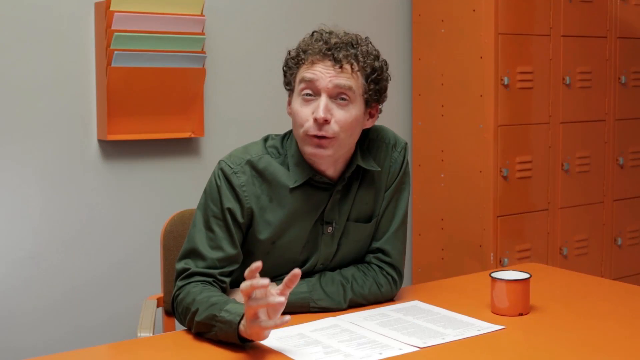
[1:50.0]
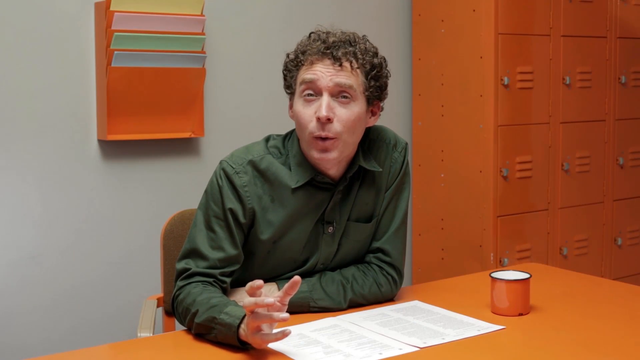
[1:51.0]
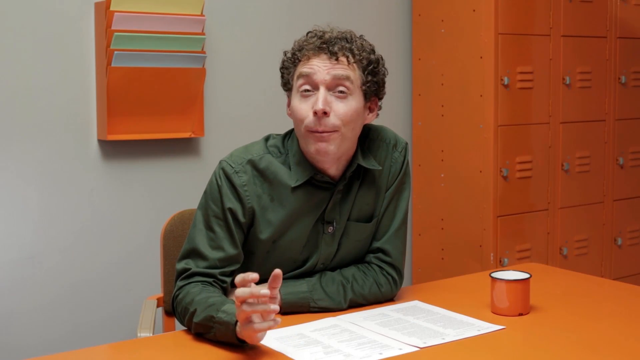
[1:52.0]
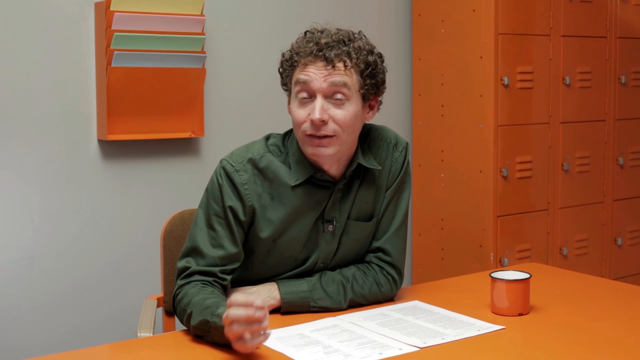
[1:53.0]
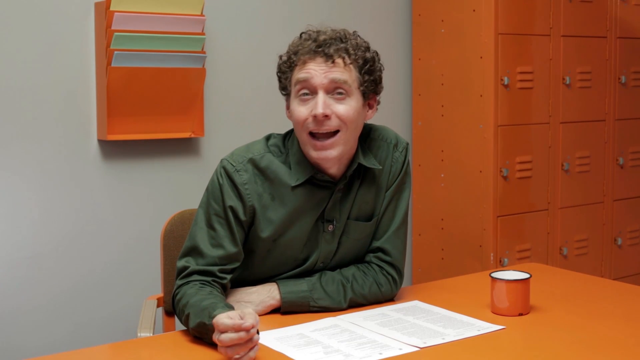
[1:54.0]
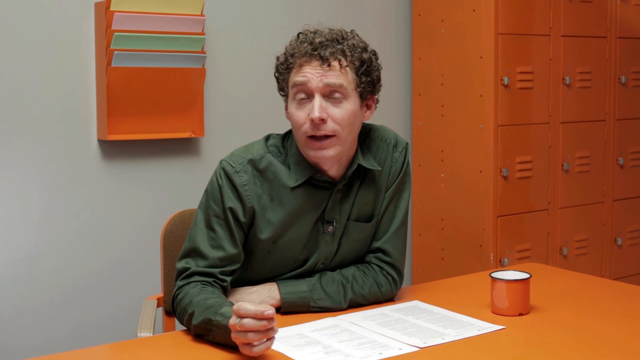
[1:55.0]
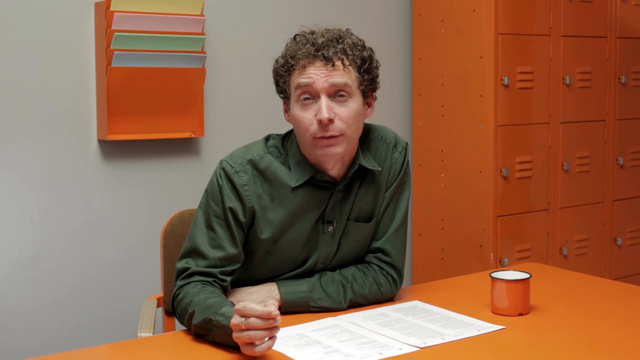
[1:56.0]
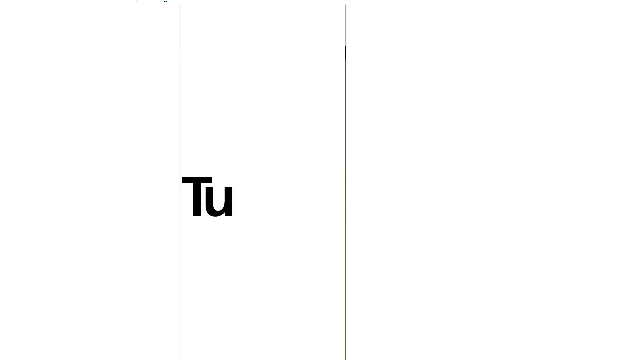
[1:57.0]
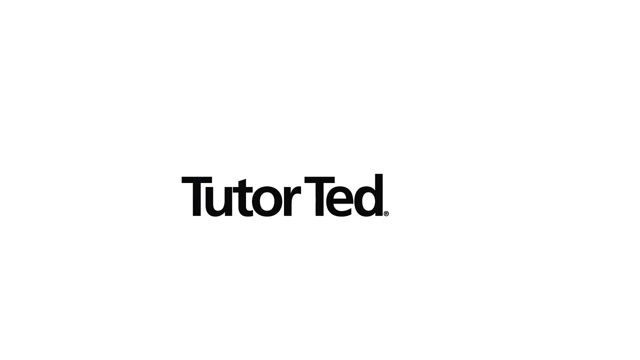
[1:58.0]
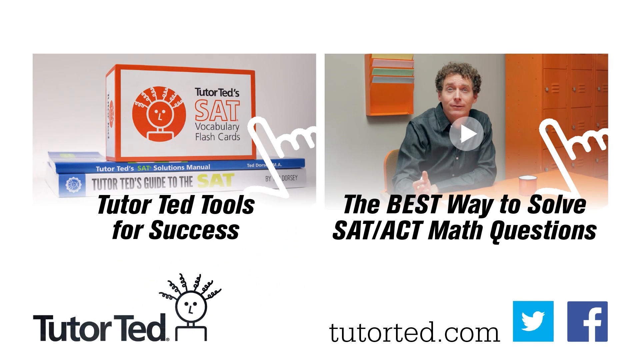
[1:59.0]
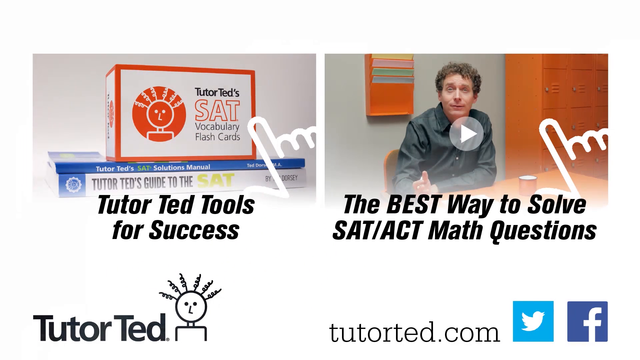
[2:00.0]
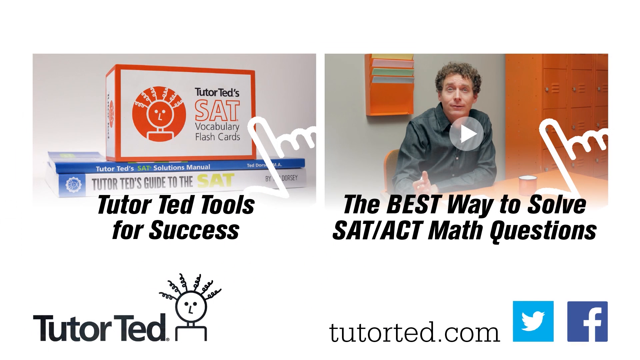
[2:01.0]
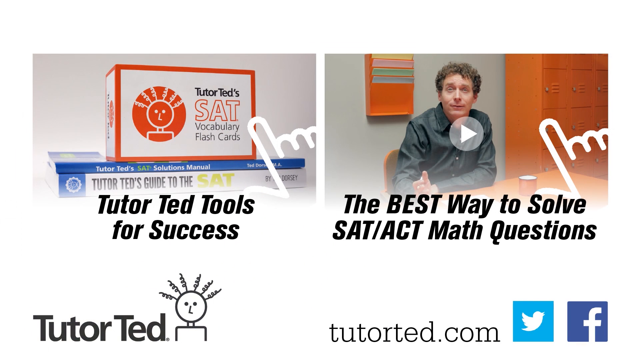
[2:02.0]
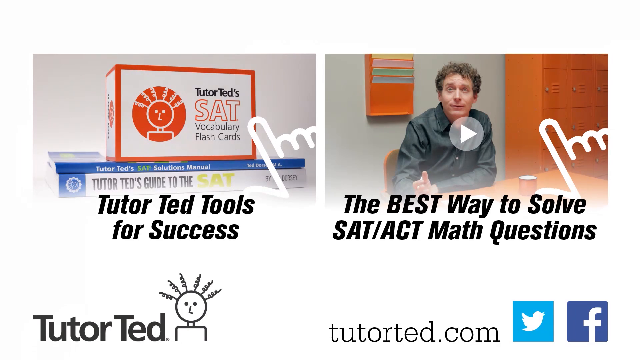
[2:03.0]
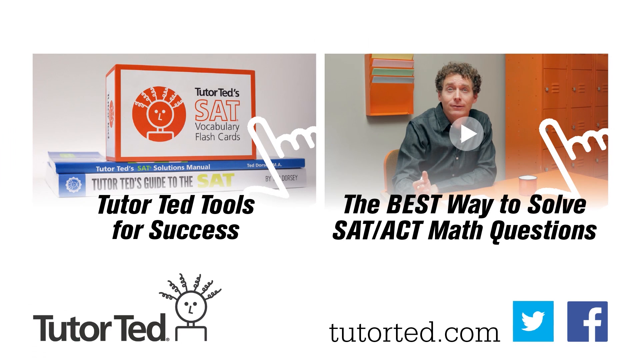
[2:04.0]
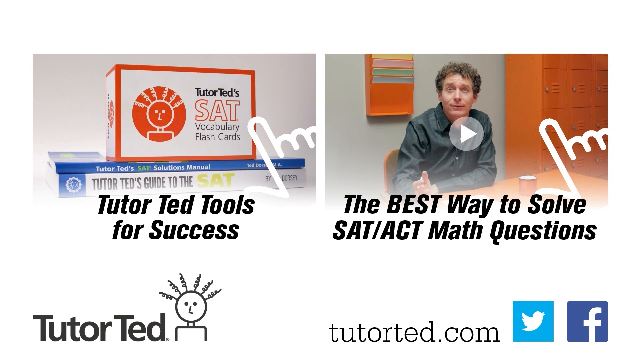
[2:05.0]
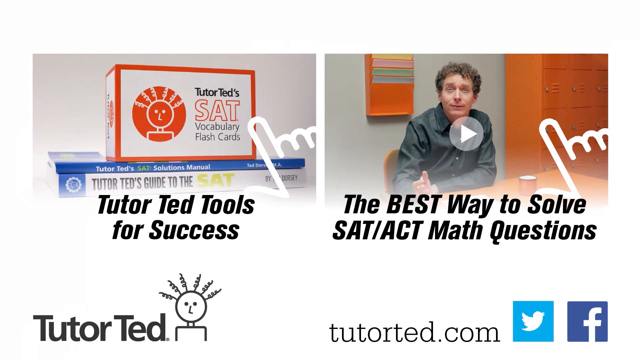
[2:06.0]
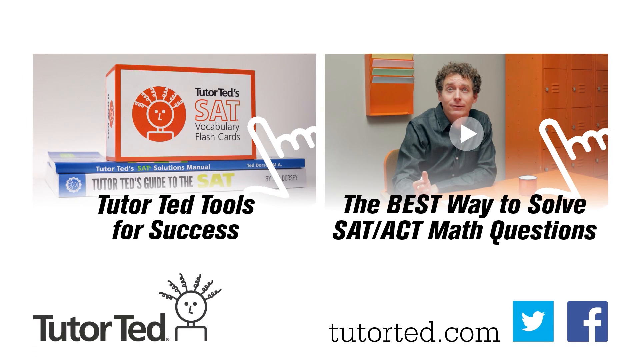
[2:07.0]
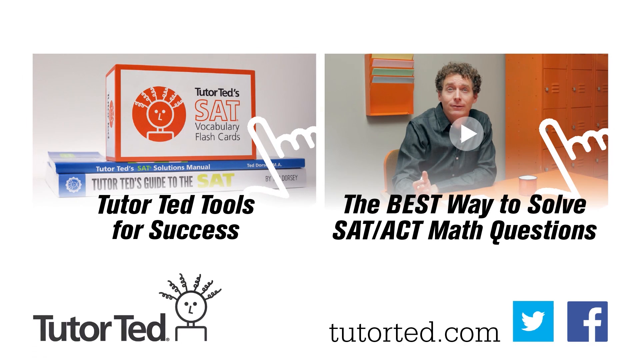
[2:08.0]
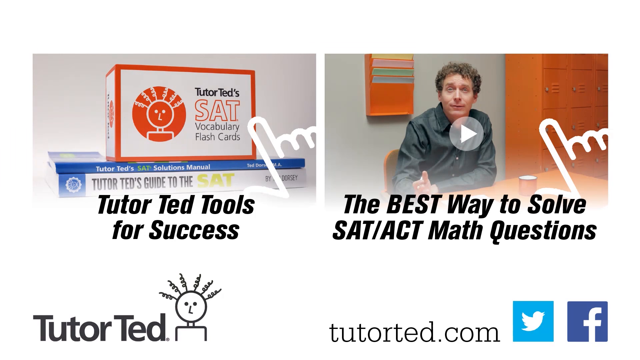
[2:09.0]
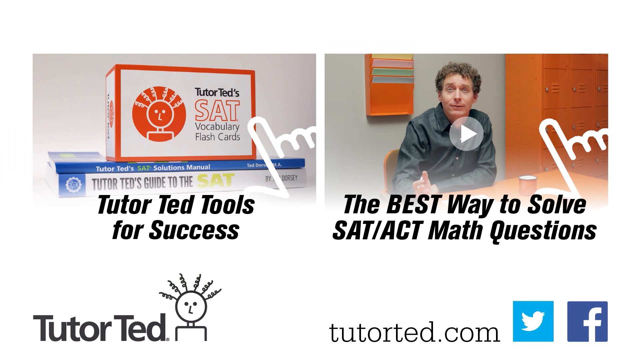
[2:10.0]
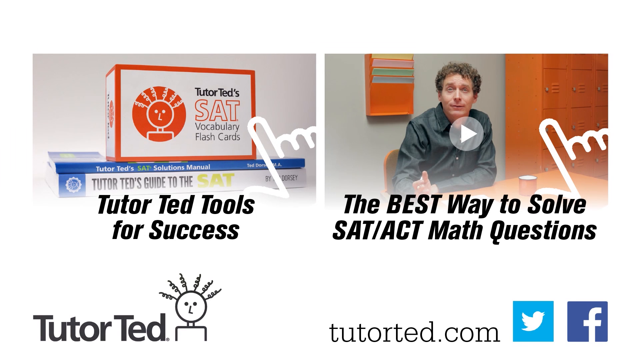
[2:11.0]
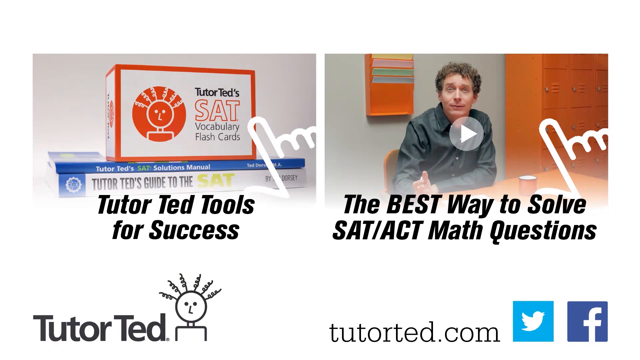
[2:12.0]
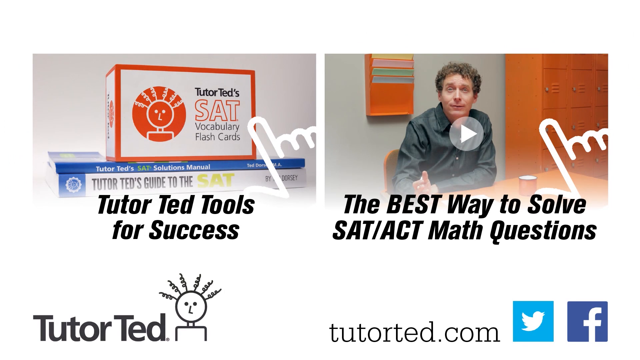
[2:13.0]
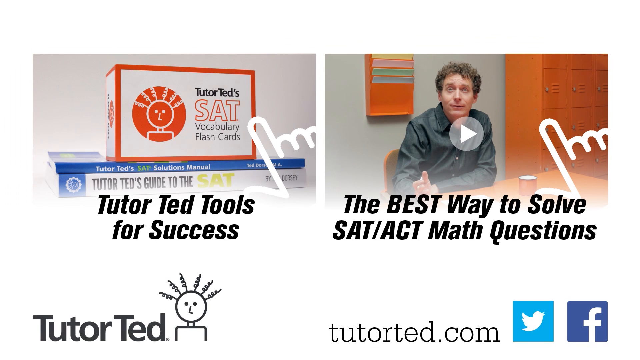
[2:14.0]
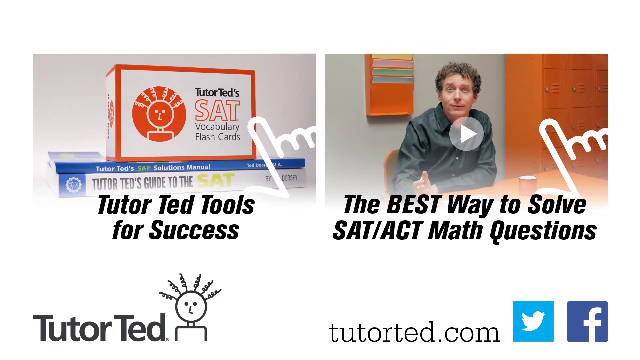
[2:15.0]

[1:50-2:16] A man sits at a desk in a room with white walls, wearing a green long-sleeve button-up shirt. He is a clean-shaven white male with short curly brown hair. On the left, a file unit is mounted on the wall with various sheets of different colors inserted. On the right is an orange locker storage unit with 12 square lockers visible. On the desk is an orange mug with a white inside and black border trim, and in front of the man are two sheets of paper, each with two columns of text. He sits in a relaxed position with one arm extended and resting on the desk and the other up against his body resting on the desk, gesturing with his extended hand and talking to the screen. The screen then fades to white, and the words "Tutor Ted" spell out across the middle of the screen in black text along with a cartoon doodle of the upper half of a man with curly extended hair. Thin vertical colored lines appear suddenly and disappear as the text appears. The view pans to the bottom, showing various thumbnails of different videos: the one on the left says "Tutor Ted tools for success" and the one on the right says "the best way to solve SAT, ACT, math questions". At the bottom are the text "tutor.com", a Twitter icon, and a Facebook icon.